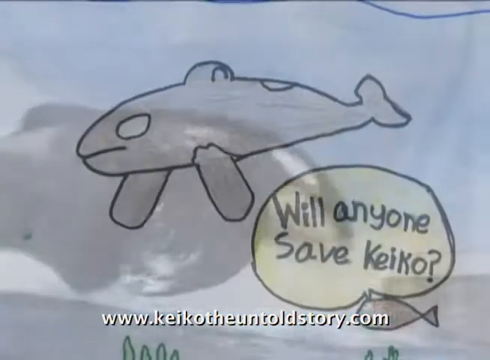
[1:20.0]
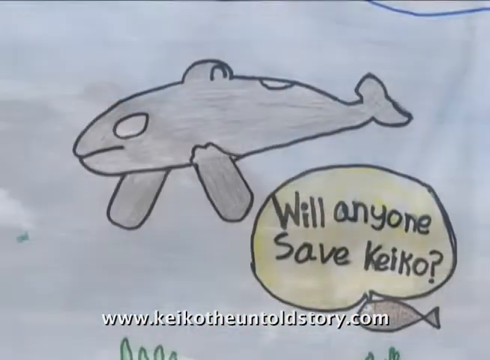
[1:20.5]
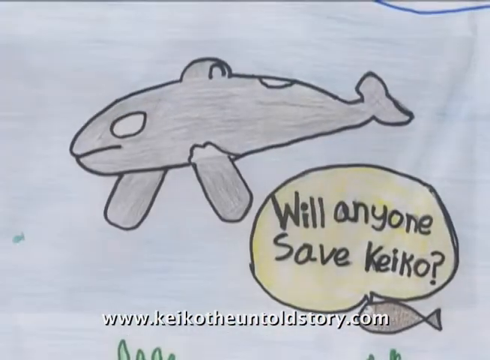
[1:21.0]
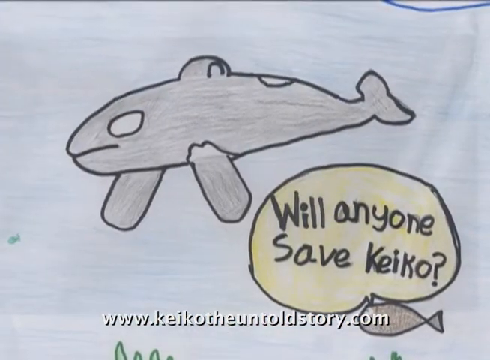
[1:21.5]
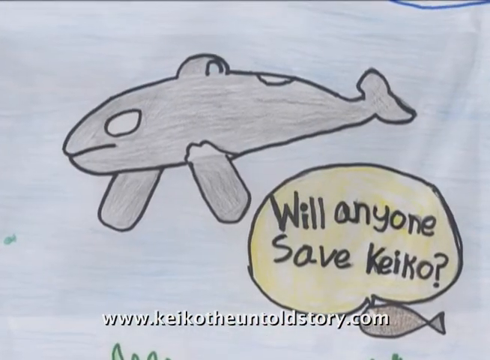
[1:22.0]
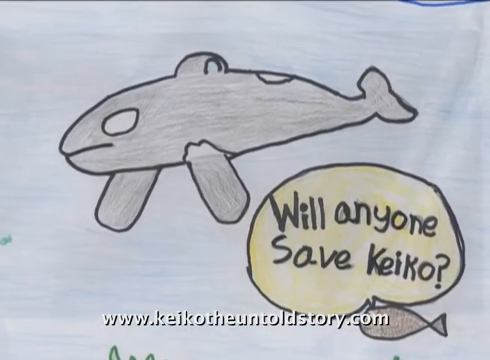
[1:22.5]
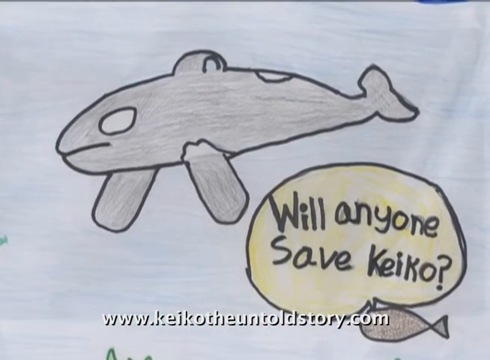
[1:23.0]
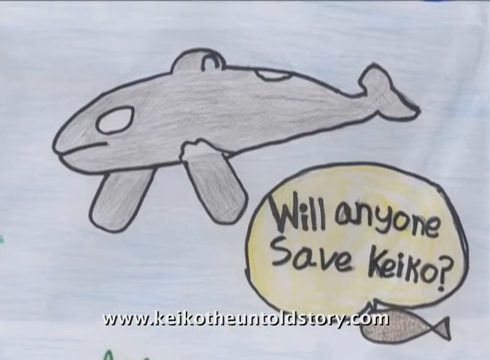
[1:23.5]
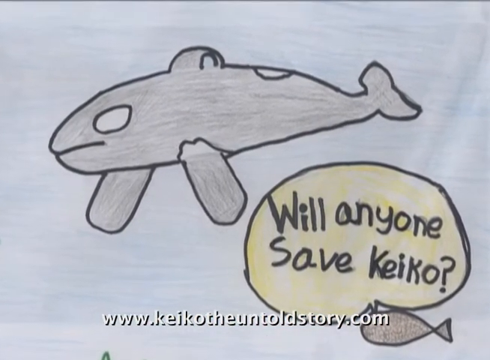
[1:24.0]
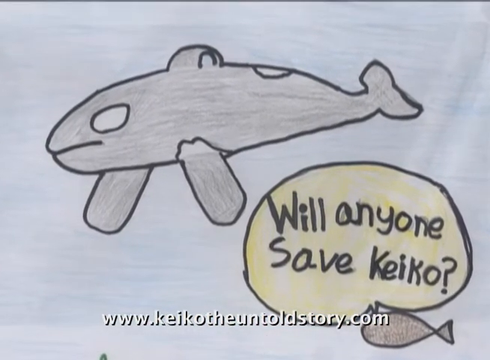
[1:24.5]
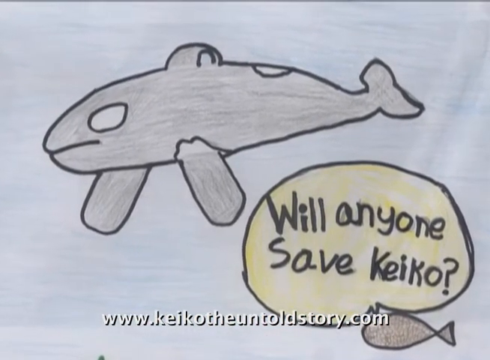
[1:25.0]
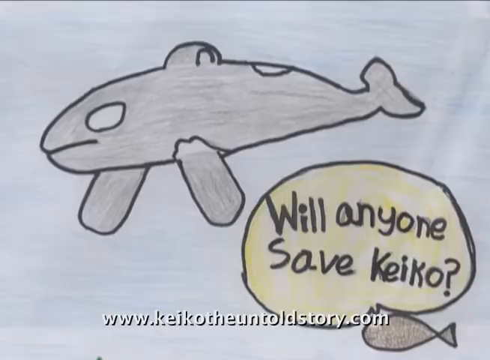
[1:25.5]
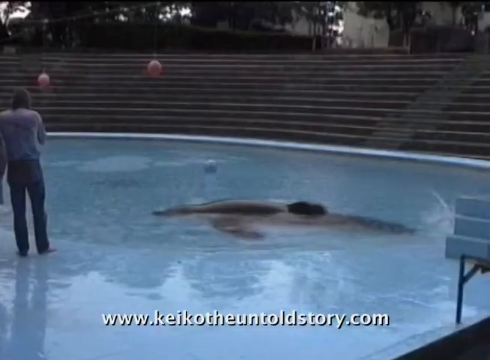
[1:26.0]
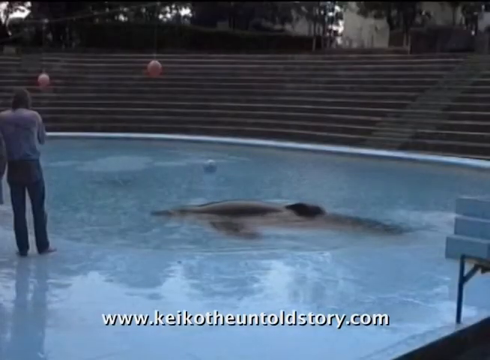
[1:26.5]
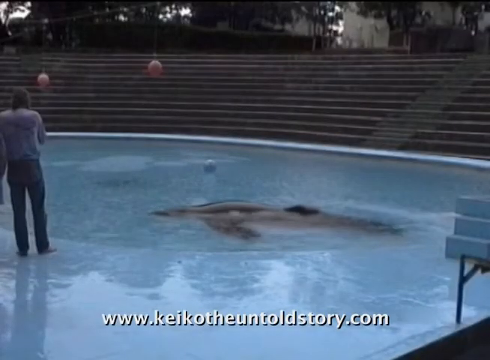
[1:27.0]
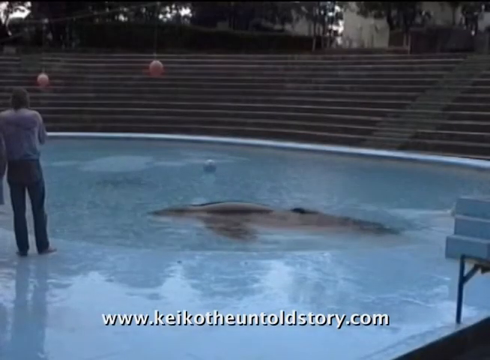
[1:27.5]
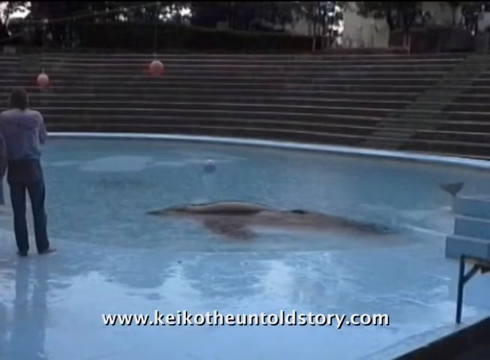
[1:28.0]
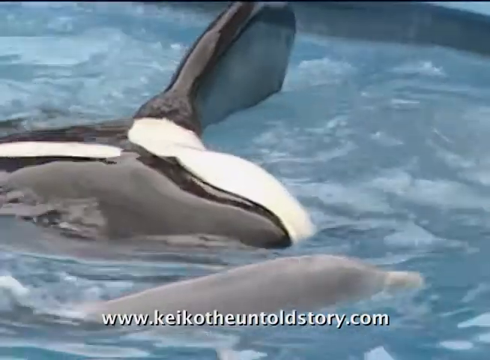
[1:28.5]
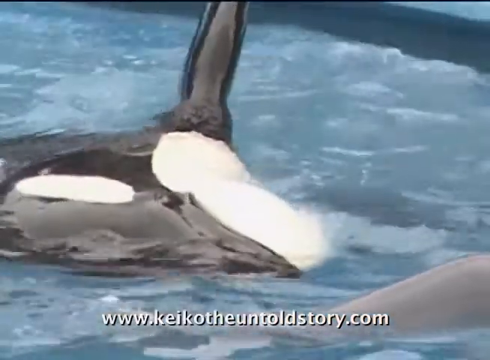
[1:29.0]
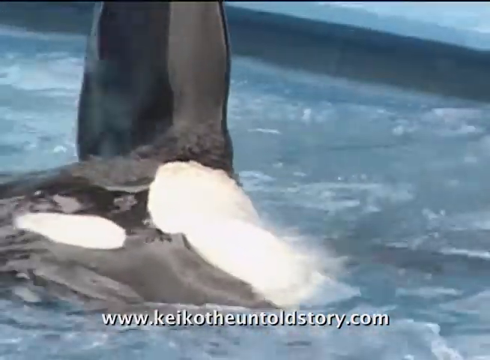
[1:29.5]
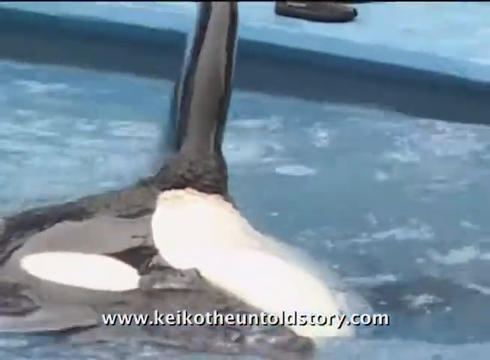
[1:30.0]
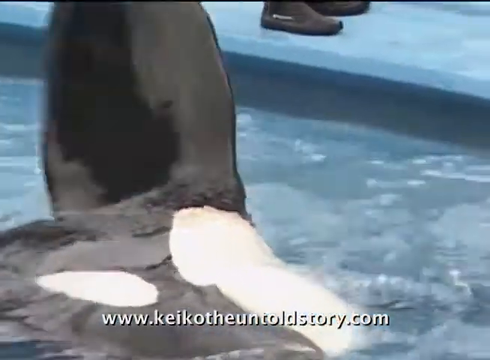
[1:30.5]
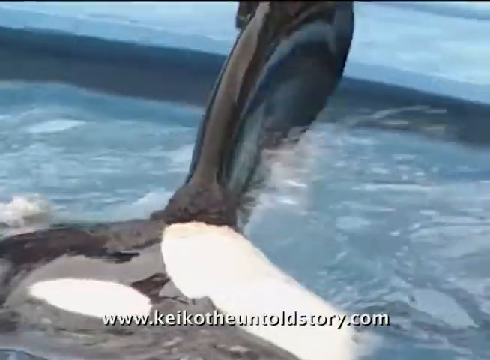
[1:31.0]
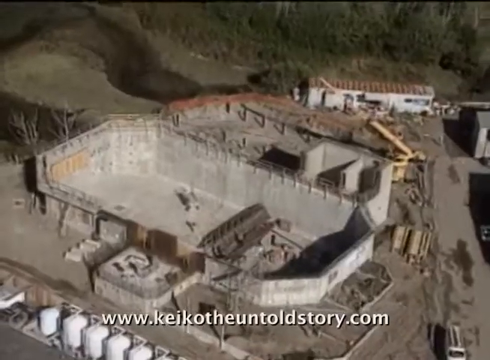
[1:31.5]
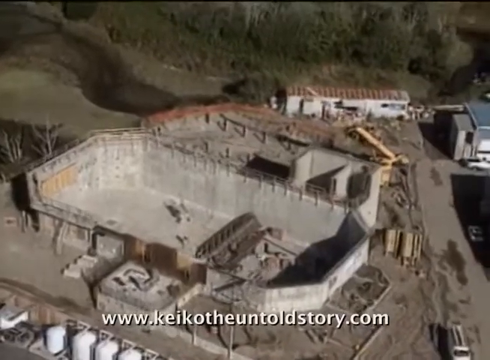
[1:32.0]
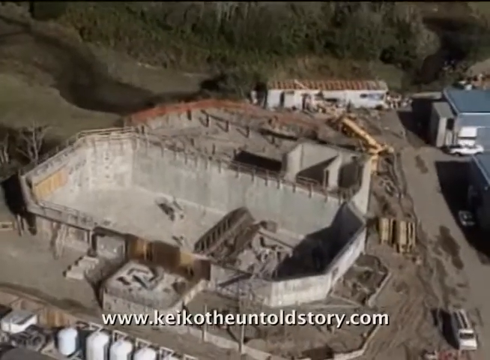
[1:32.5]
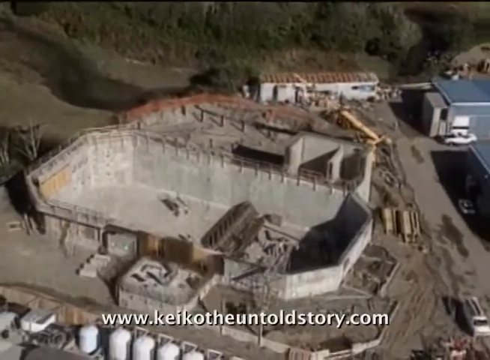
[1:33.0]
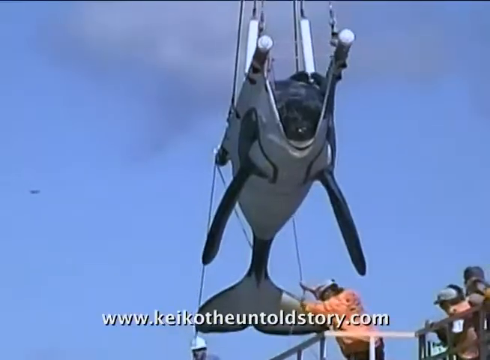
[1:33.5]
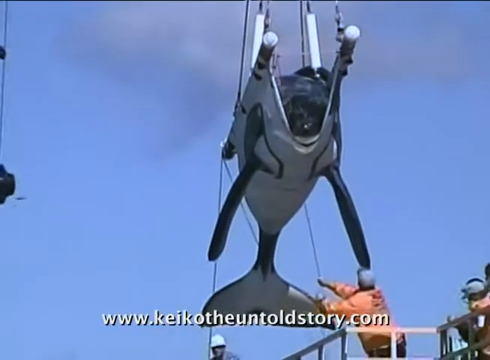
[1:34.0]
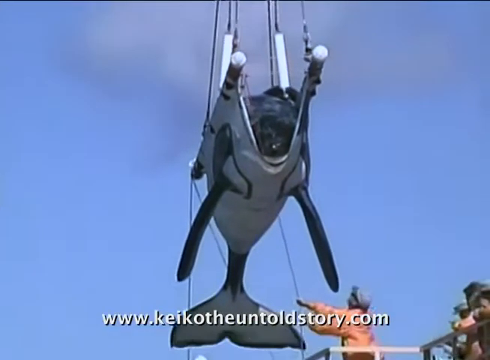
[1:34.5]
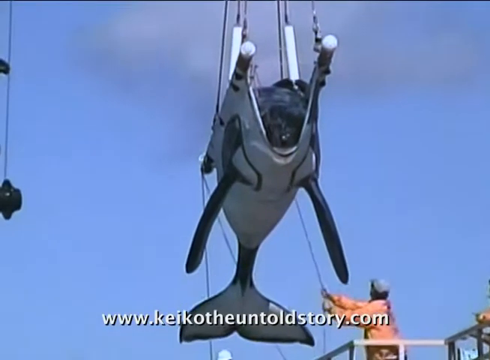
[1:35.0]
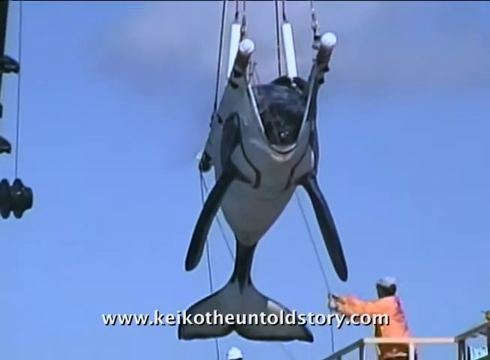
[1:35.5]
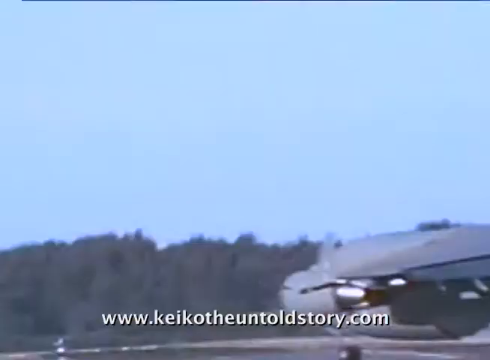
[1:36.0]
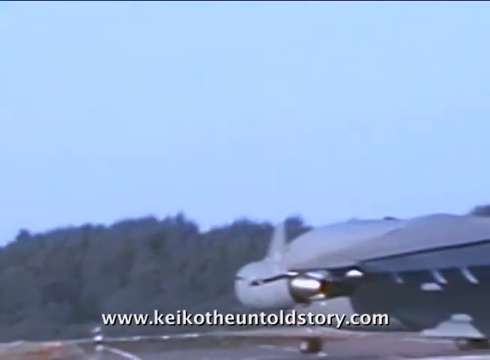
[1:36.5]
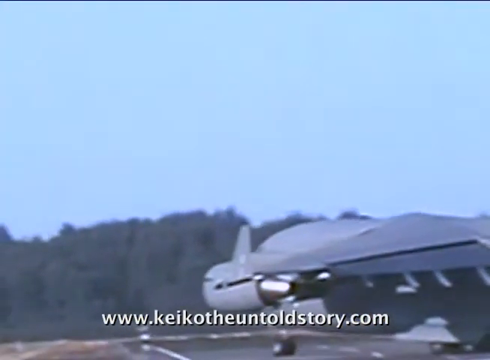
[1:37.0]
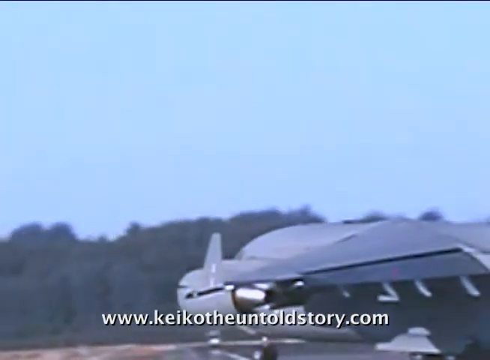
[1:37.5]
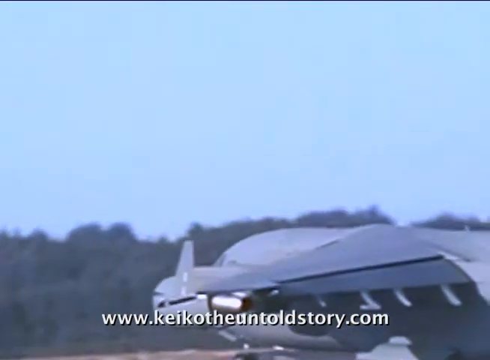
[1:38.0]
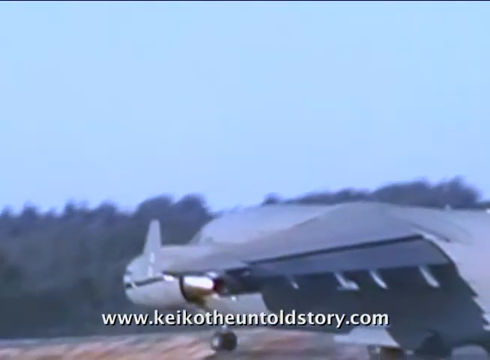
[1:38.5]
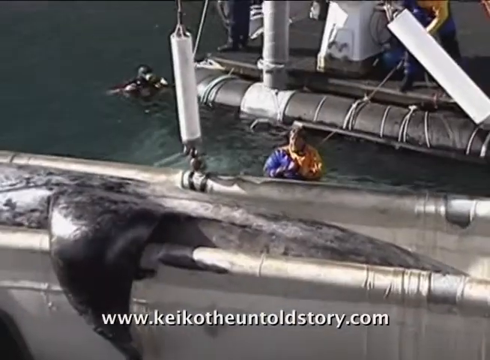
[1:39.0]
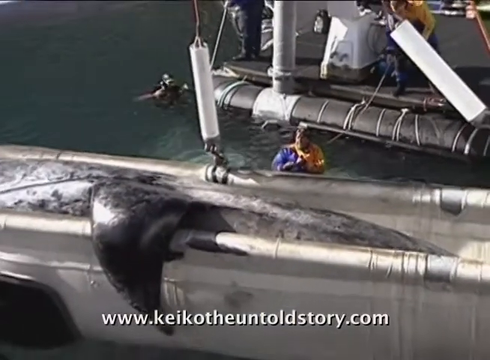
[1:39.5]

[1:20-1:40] A cartoon of an orca is in the middle of the screen, with a fish in the bottom right-hand corner and a text bubble above the fish reading "Will anyone save Keiko?" White text at the bottom says "www.keikotheuntoldstory.com," and an image of Keiko swimming is superimposed in the background. The camera pans closer to the cartoon. The shot switches to empty stands in the background, with some trees and buildings above them. The orca floats in the pool in clear gray-blue water, and above the pool is a string with balls hanging down. On the left, a person with their back to the camera looks into the pool at the orca. Next, the orca is on its side, fanning its fin, and there is also a gray dolphin in the water. An aerial view shows a rectangular, empty concrete structure that looks like a pool, under construction and incomplete, surrounded by what look like temporary mobile buildings, dirt, and some trees in the background; the shot is moving to the left. A picture shows an orca in a white sling being lifted through the air. A worker at the bottom right of the screen holds a rope attached to the sling, and another worker is to the right; both wear hats and orange jackets. The sky in the background is light blue with clouds. The shot switches to an airplane taxiing down a runway. Then the orca is inside a sling with its fin flapping over the side, with water in the background. Two people are in the water: one in full scuba gear with a mask, the other in a blue and white suit. A raft with pontoons holds two workers standing on it; at first only their legs, feet and torsos are visible until the shot pans out and shows their full bodies.